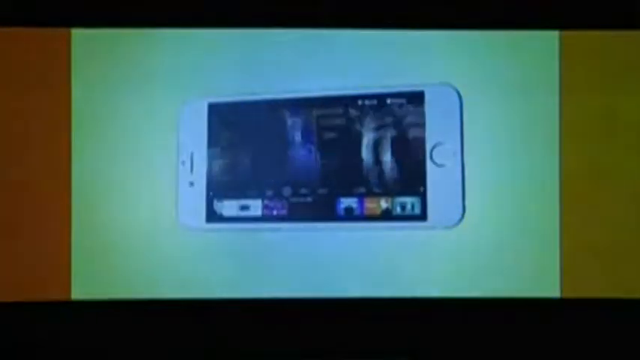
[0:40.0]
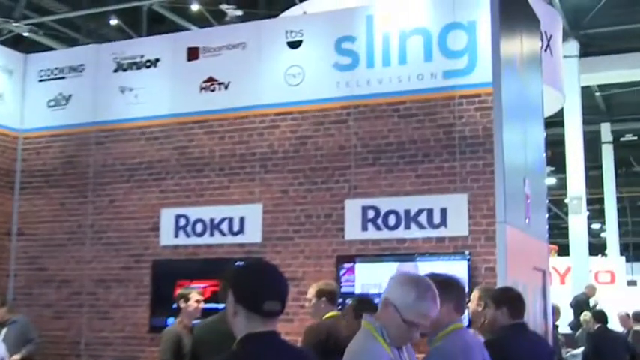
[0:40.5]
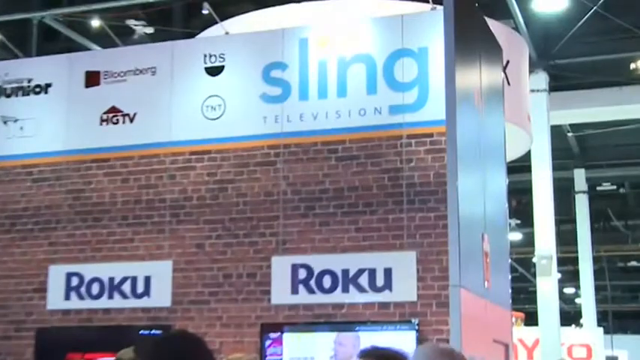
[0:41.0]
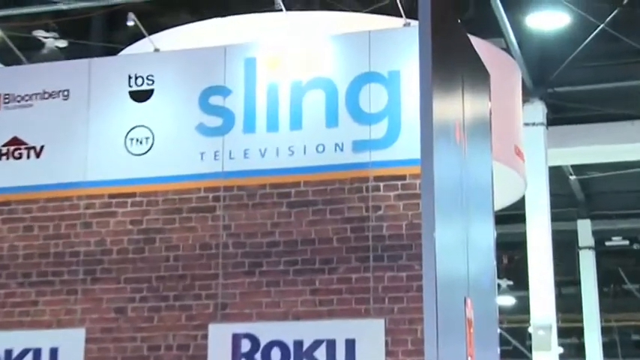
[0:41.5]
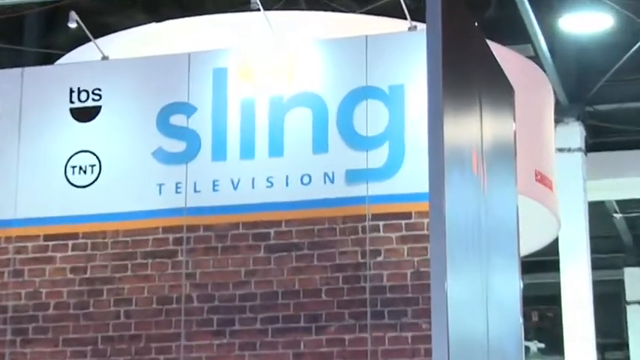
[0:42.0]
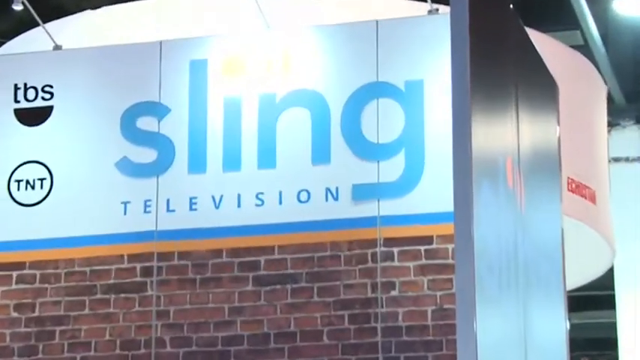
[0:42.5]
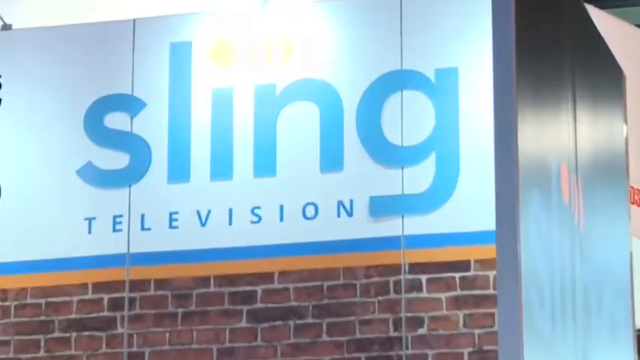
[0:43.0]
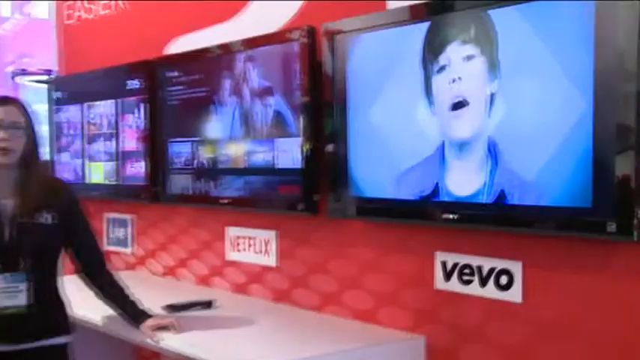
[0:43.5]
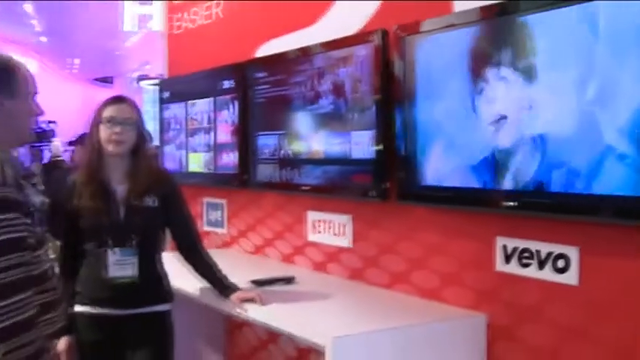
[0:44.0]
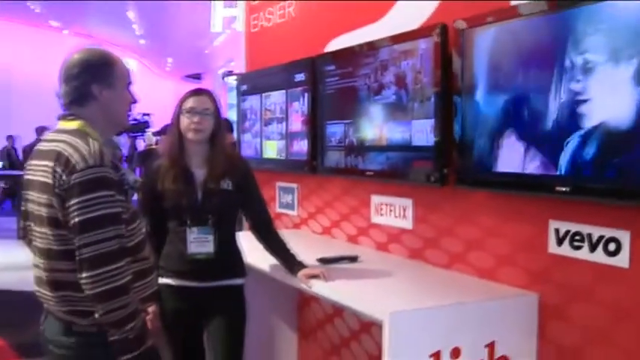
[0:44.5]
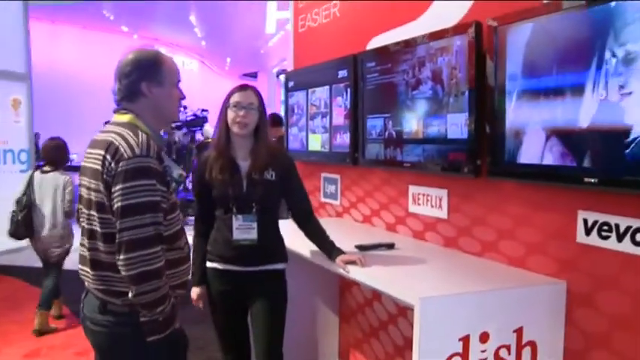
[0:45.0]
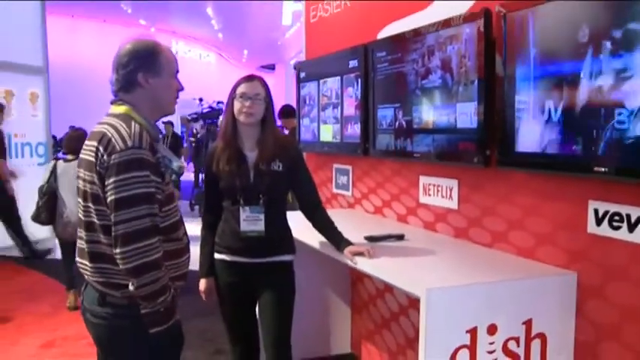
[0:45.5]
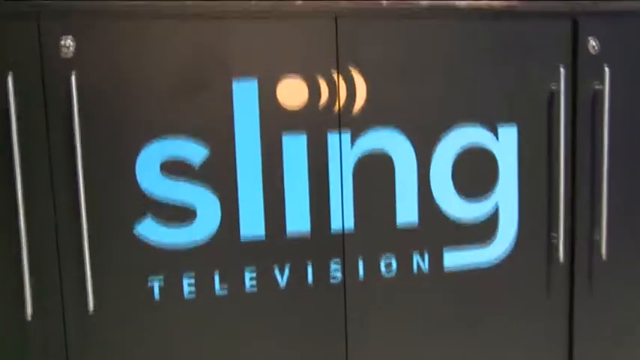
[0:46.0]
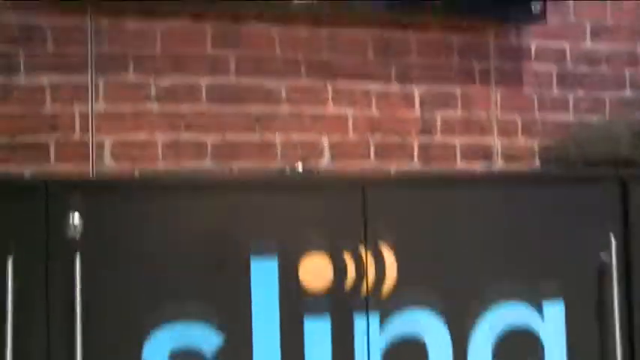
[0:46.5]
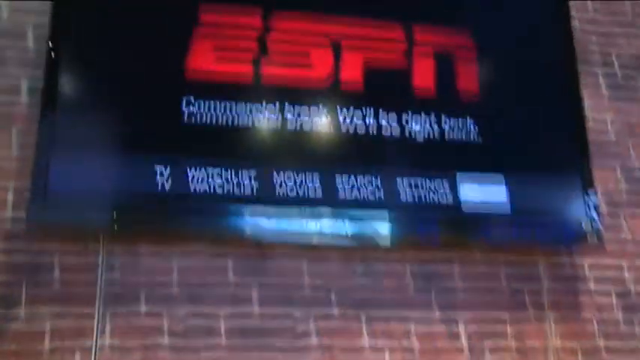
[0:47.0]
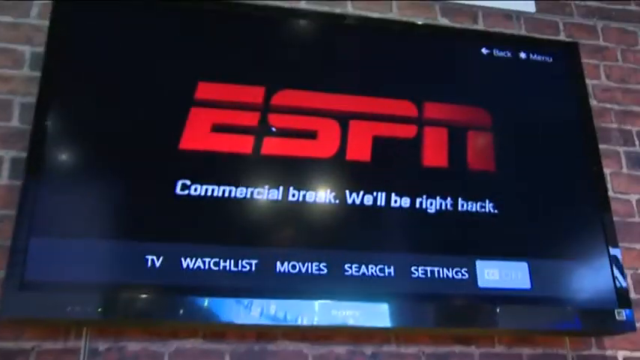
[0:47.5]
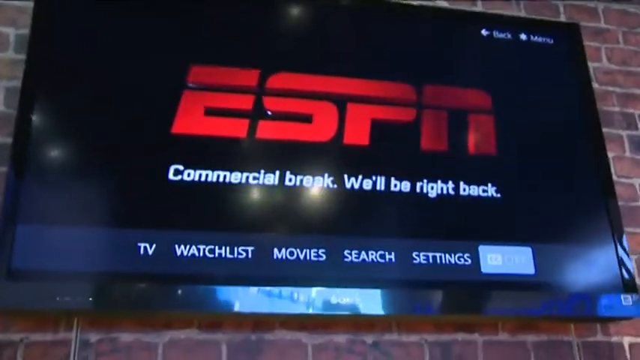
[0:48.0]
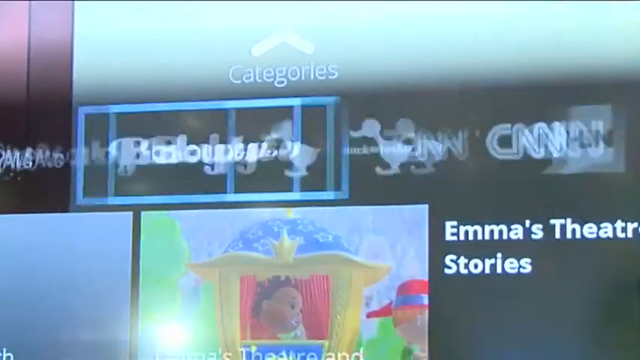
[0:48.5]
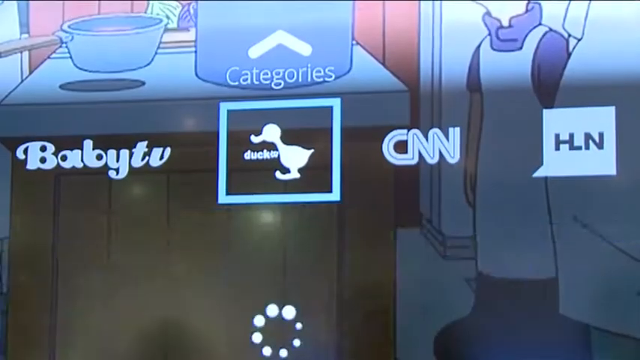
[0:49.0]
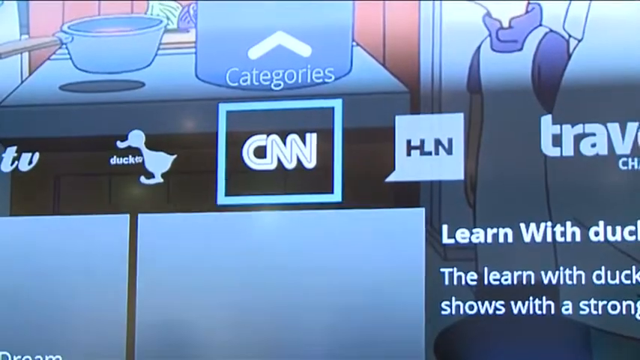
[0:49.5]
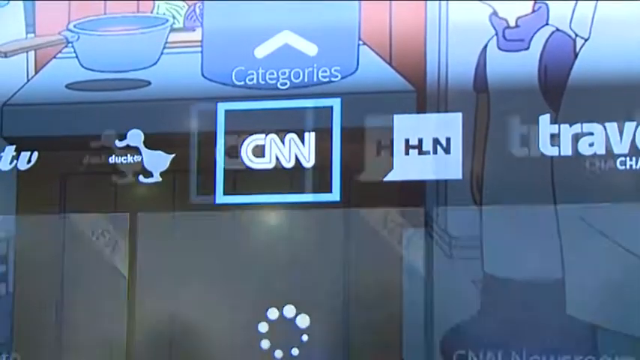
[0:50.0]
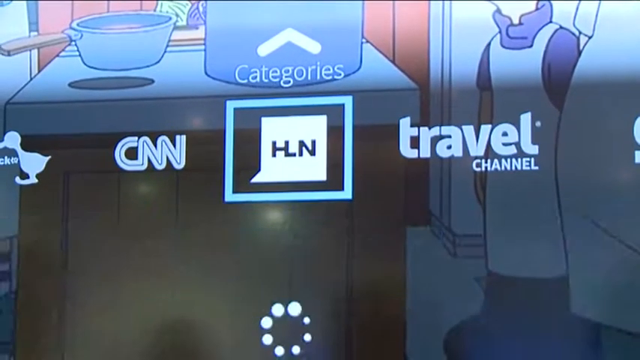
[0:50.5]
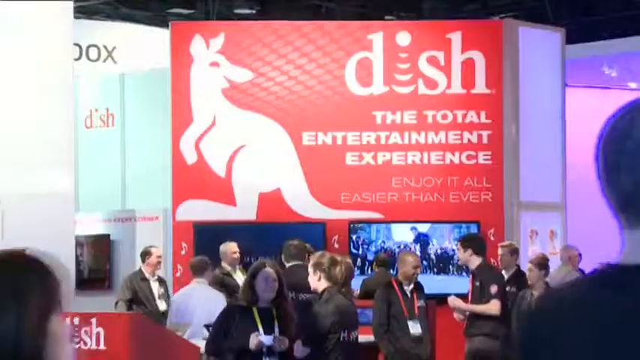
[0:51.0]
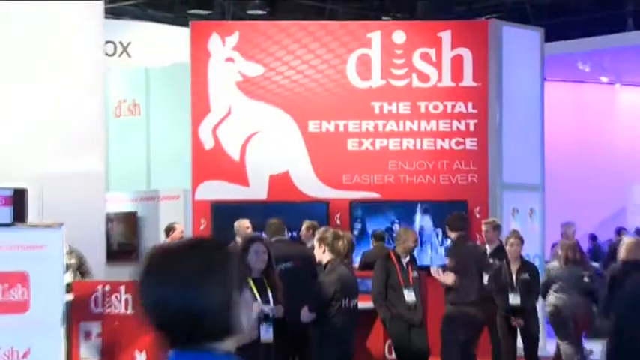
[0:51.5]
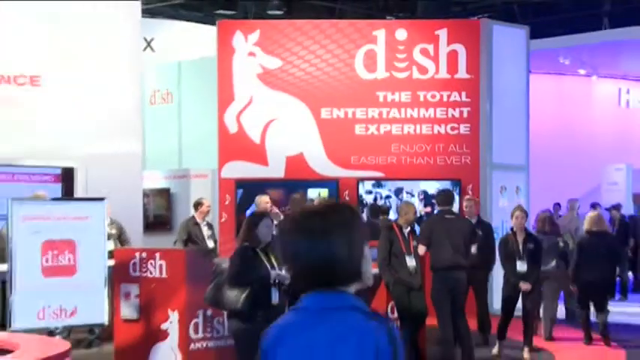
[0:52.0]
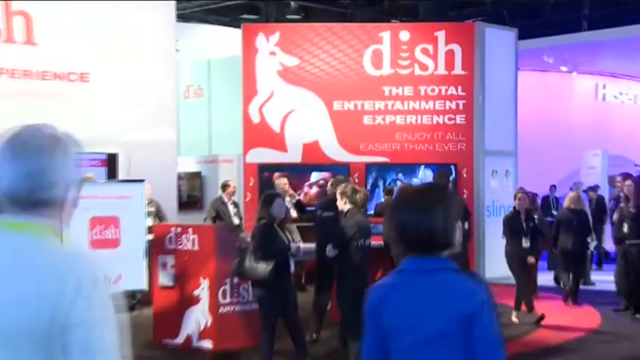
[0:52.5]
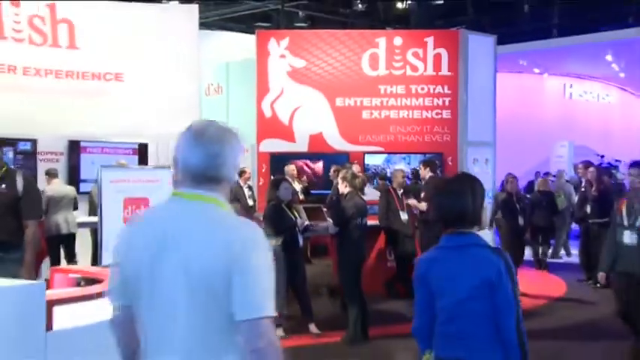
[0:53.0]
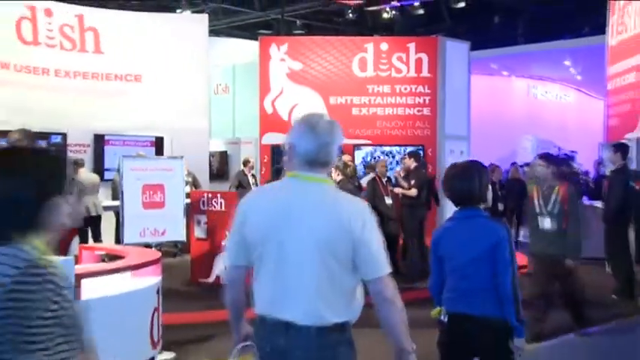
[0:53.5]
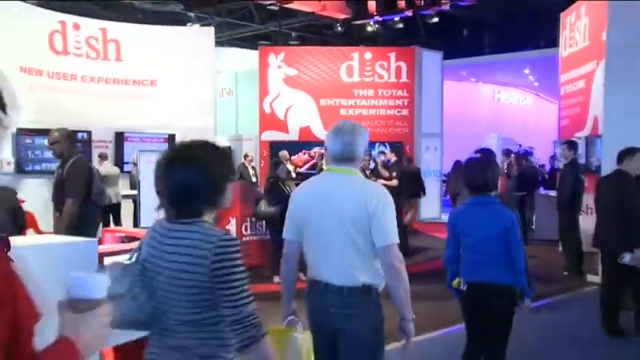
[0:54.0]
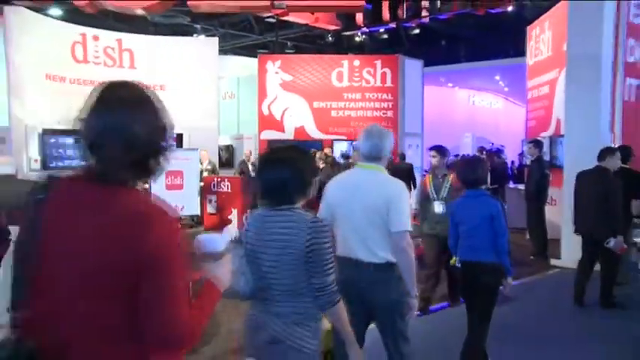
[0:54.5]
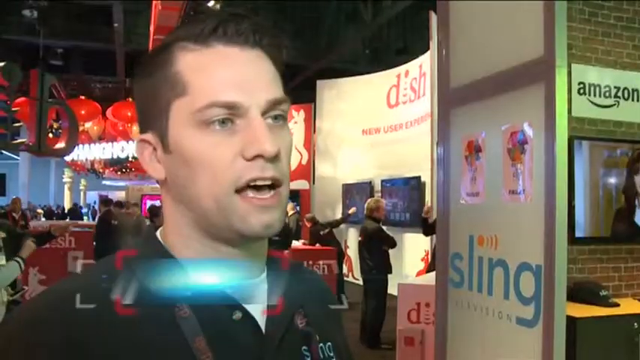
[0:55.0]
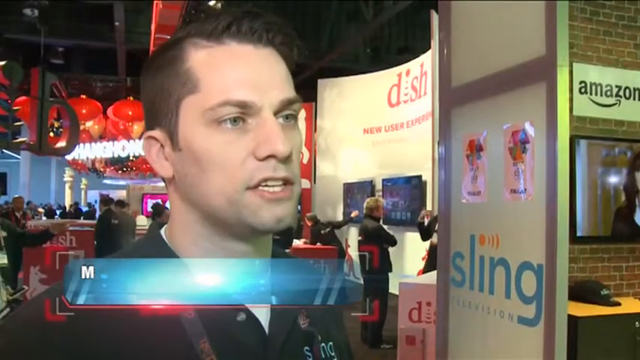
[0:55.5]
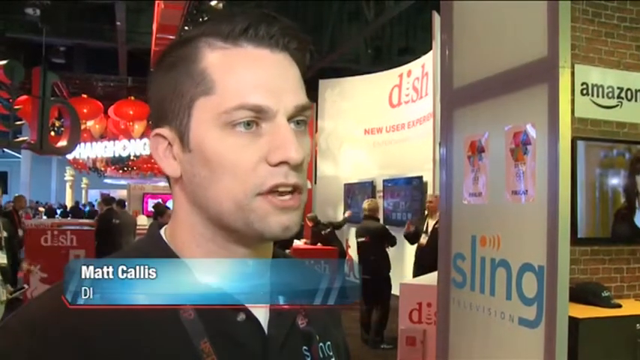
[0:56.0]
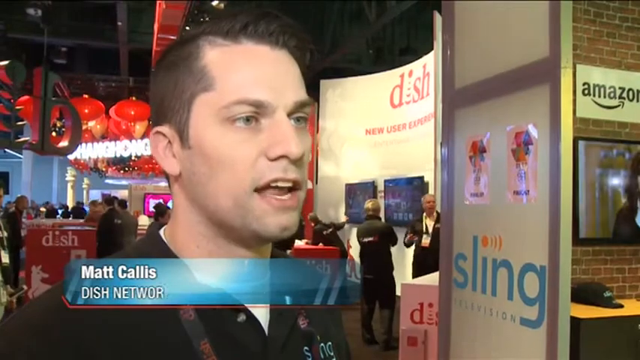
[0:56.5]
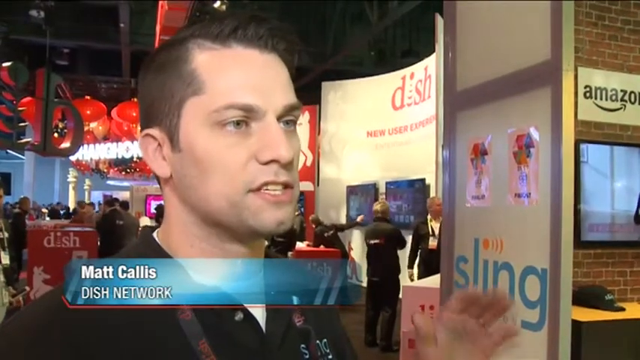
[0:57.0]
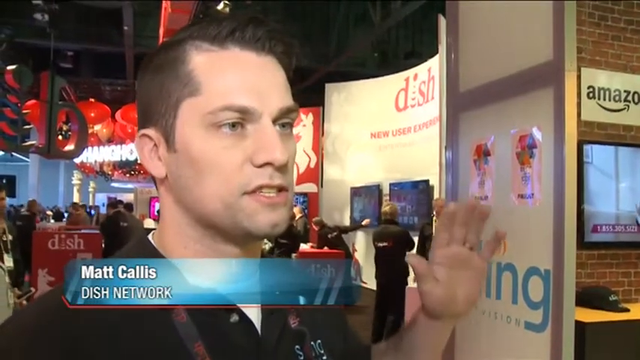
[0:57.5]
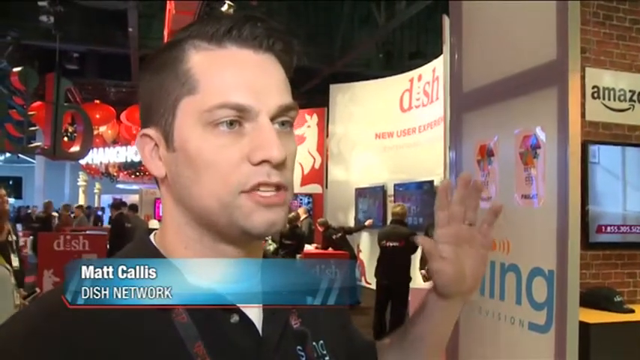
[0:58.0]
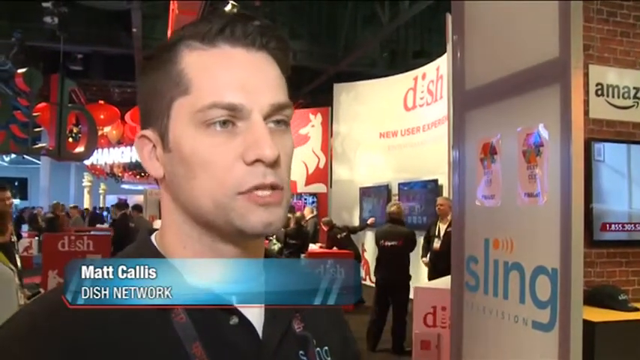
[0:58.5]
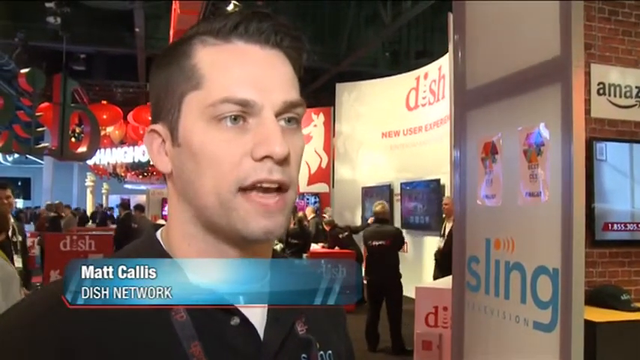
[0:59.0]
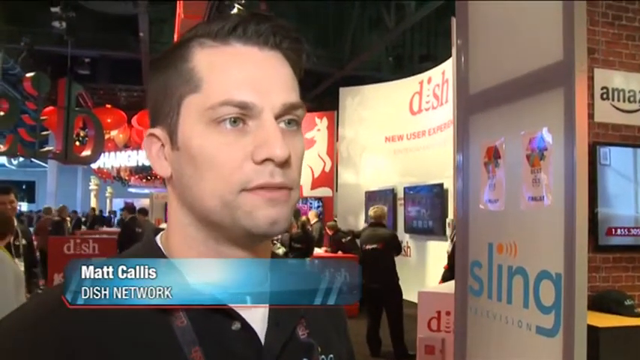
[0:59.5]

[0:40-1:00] A close-up shows a white smartphone before the video switches to the Sling section of the convention center. Advertisements alongside its name include Bloomberg, PBS and more, with Roku's below that. The camera zooms in on the name "Sling Television" on the section. A different reporter then appears, seemingly interviewing someone, possibly a member of the company, in front of the Netflix TV area. The video swings back to Sling, where a TV above the sign is connected to ESPN. A close-up of a screen shows someone moving through channels, probably the channels supported by Sling. Next is the Dish section, which has a kangaroo and a red-colored area. Matt Callis from the Dish Network is interviewed; speaking while looking to the right, he raises his hand and waves it off to the right, roughly parallel with his body. A final shot shows him with a reporter inside what looks like a private room.